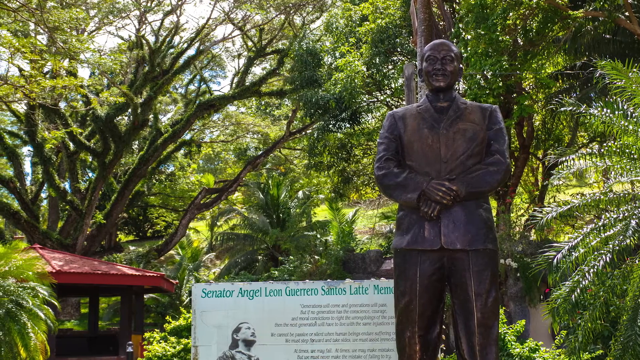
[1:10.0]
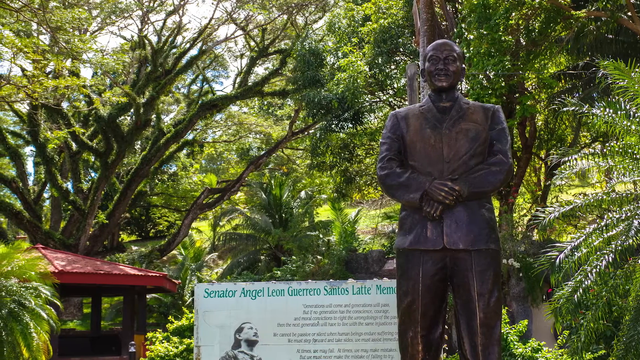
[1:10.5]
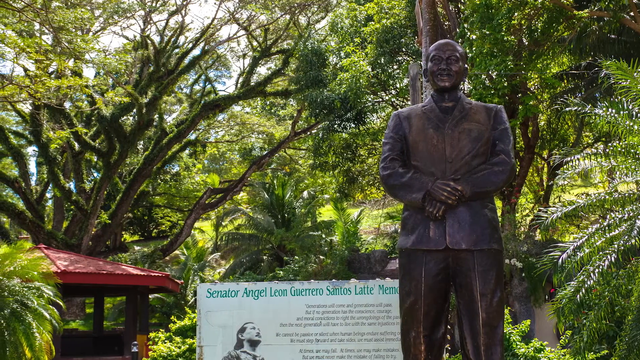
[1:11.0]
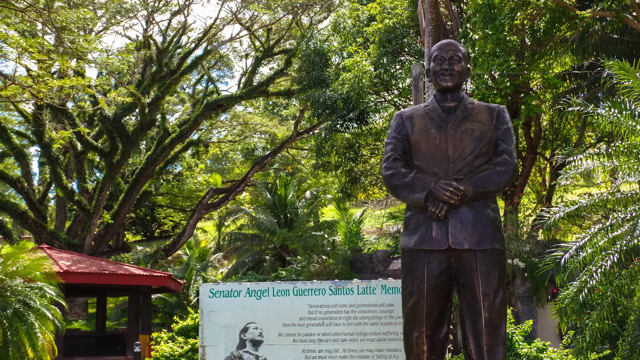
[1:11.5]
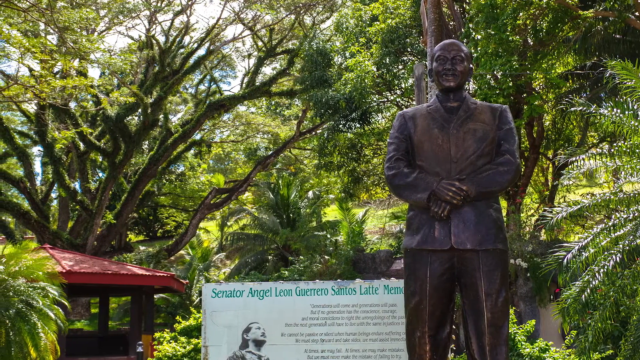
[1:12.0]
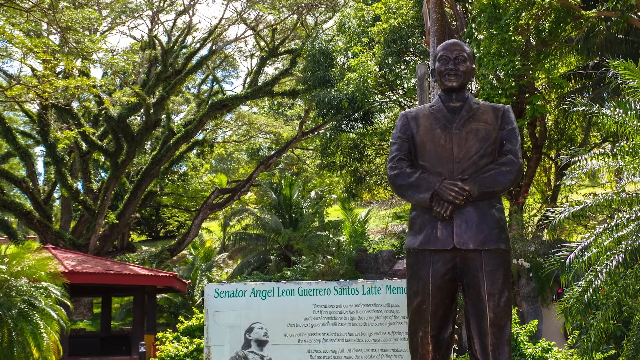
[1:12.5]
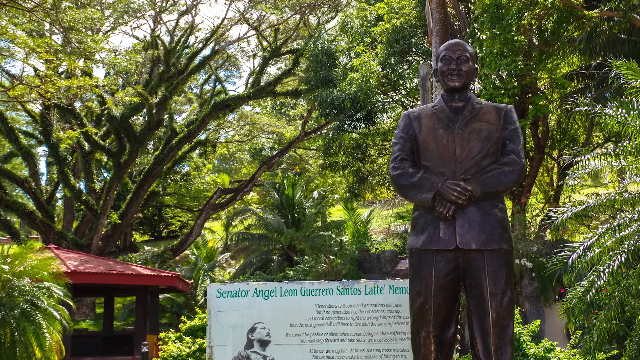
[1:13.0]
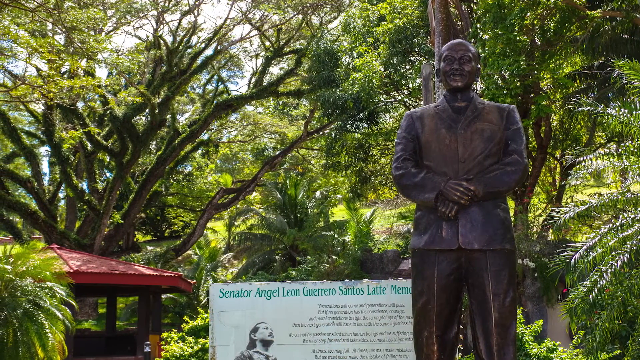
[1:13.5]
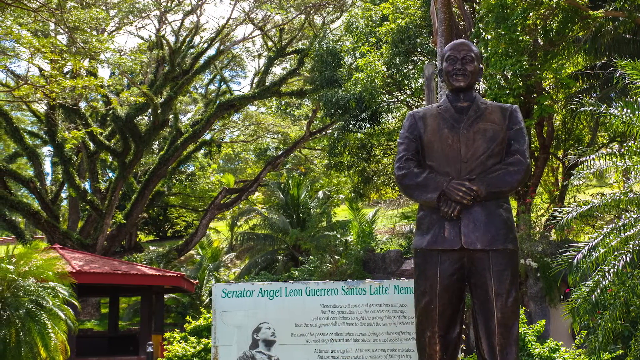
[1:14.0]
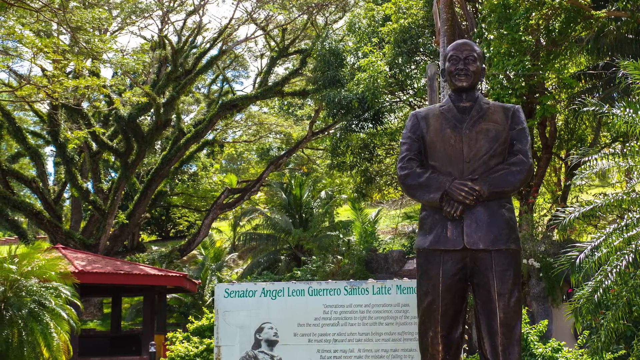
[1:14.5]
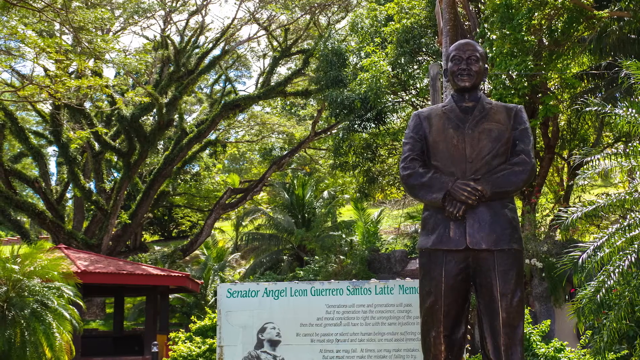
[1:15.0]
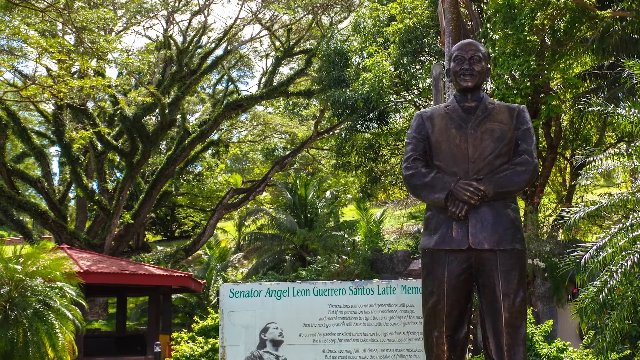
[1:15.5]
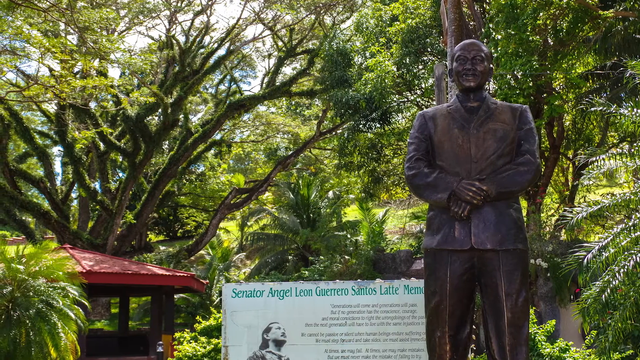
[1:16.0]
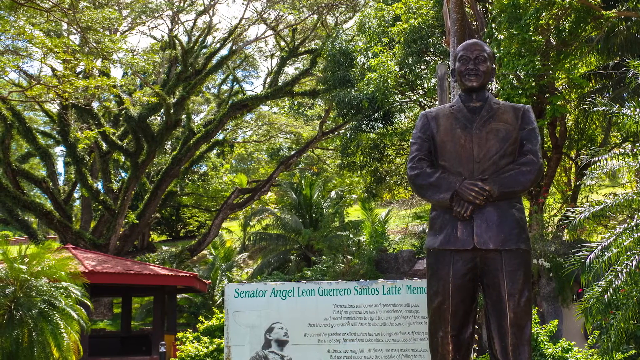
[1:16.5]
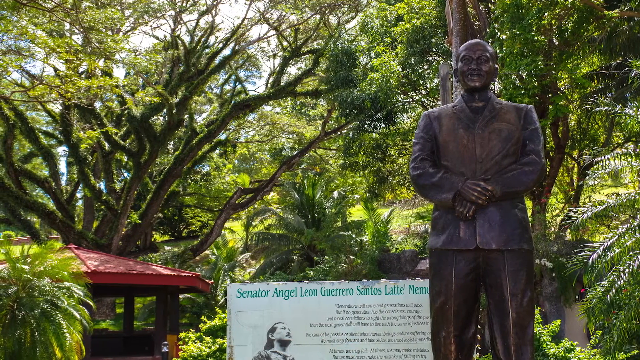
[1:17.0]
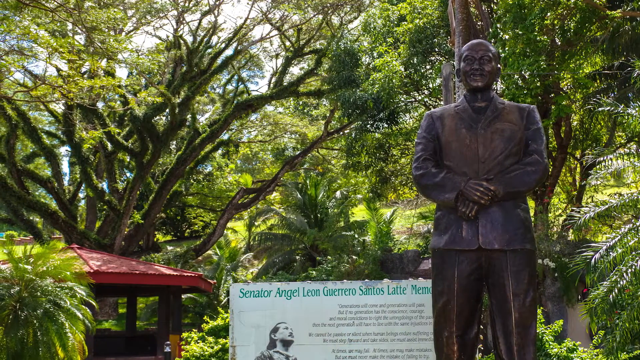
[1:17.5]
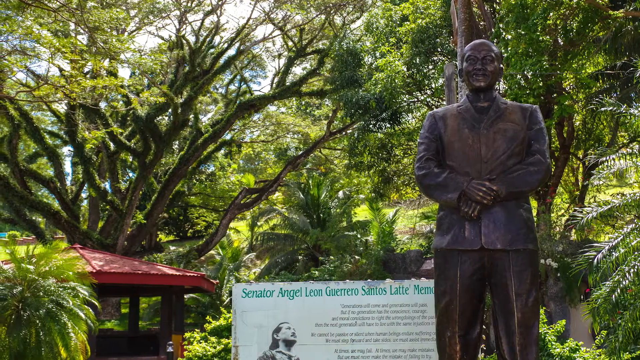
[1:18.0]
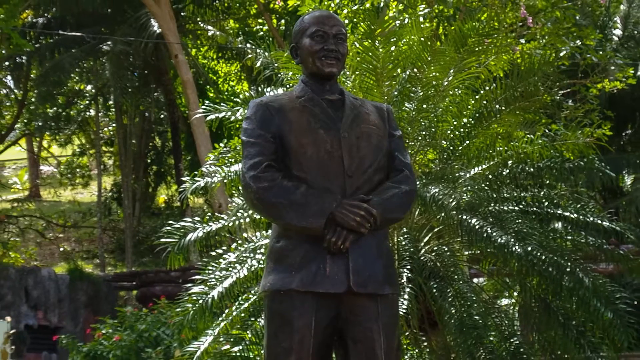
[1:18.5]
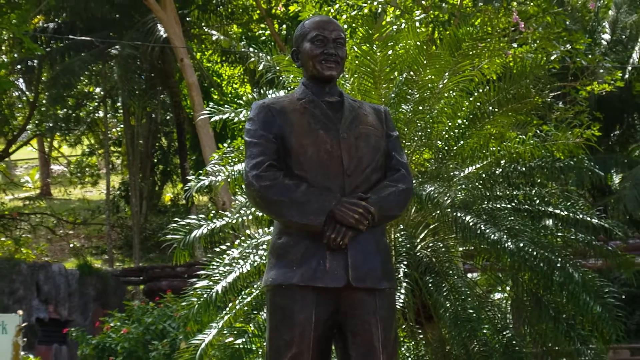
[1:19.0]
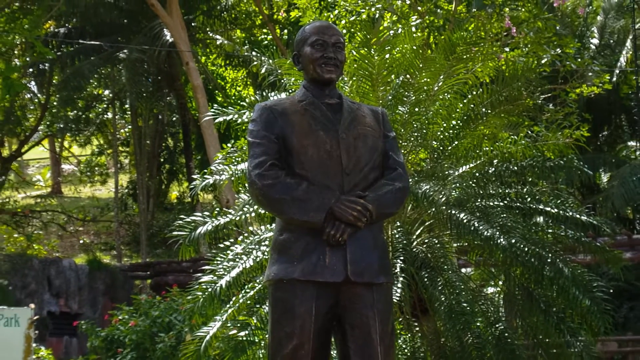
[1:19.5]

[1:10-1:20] The camera continues to pan from right to left across a park with very tall green trees. In the foreground on the right of the screen is a bronze statue of a Japanese man dressed in a jacket and trousers, his right hand over his left, gripping the wrist of his left hand. On the left of the screen is a pavilion with a red roof. In the background a white sign with green writing reads "Senator Angel Leon Guerrero Santos Latte", with the rest of the sign cut off. Then another angle of the same statue appears, with the statue in the centre of the screen as the camera zooms backwards. Behind the statue are a large fern and the corner of the white sign seen earlier.